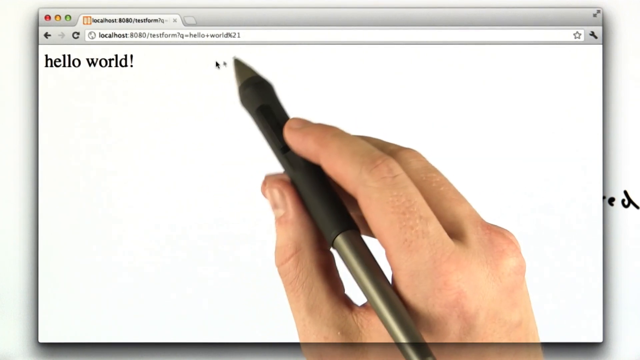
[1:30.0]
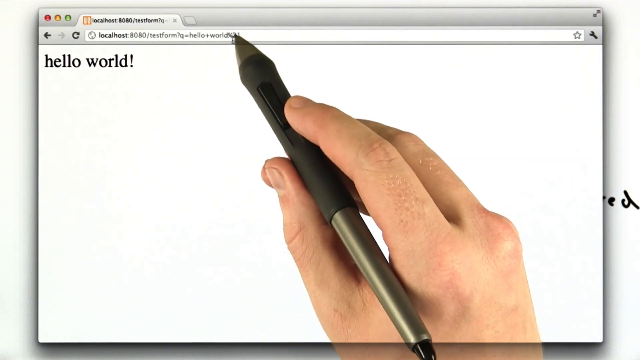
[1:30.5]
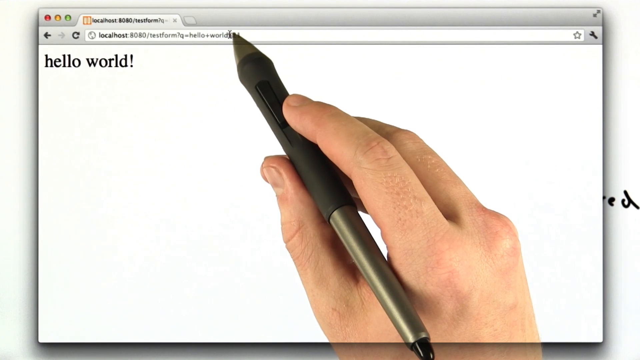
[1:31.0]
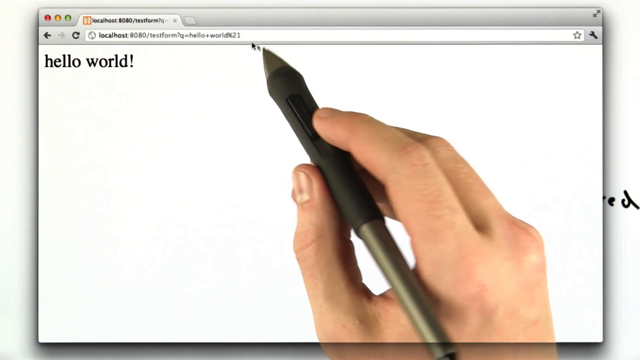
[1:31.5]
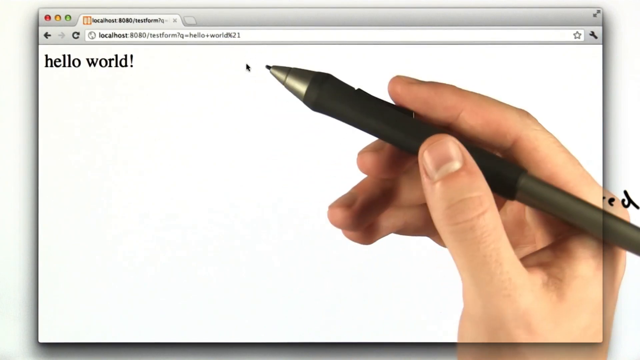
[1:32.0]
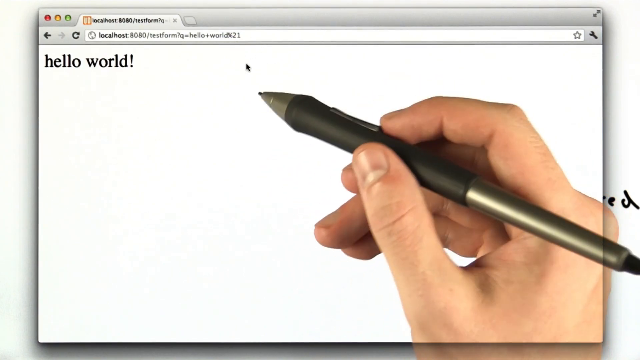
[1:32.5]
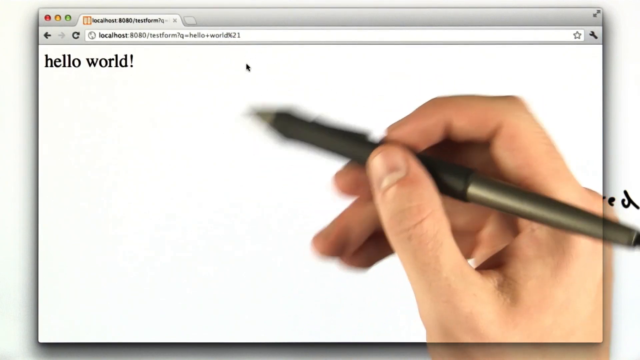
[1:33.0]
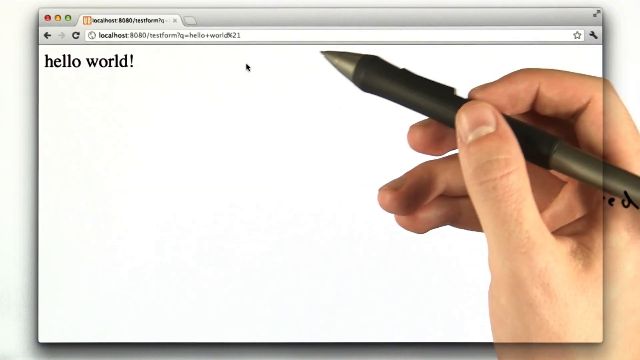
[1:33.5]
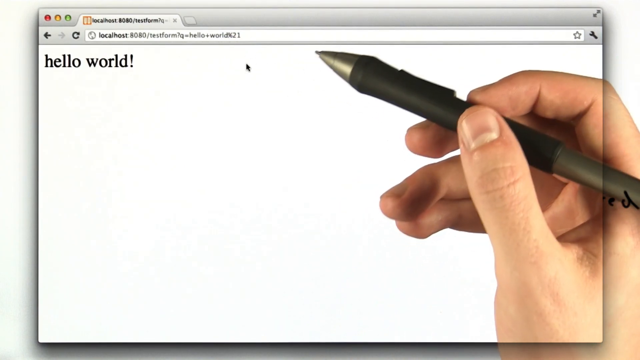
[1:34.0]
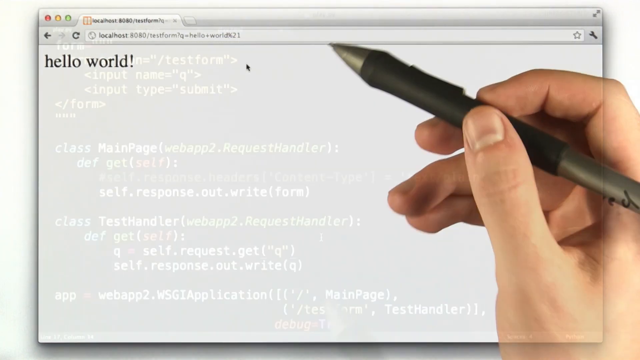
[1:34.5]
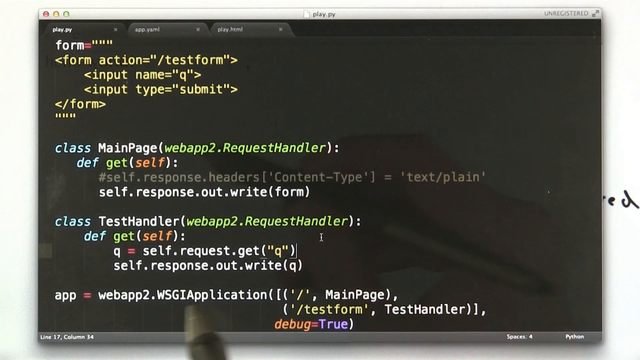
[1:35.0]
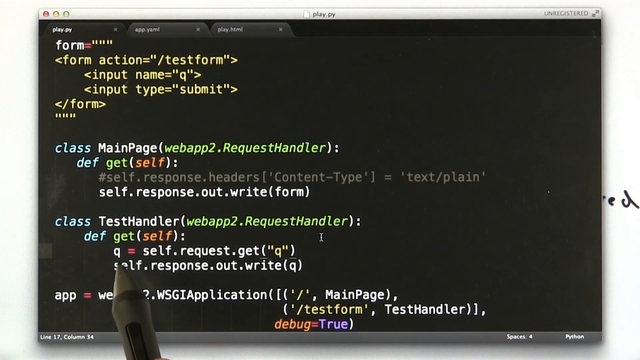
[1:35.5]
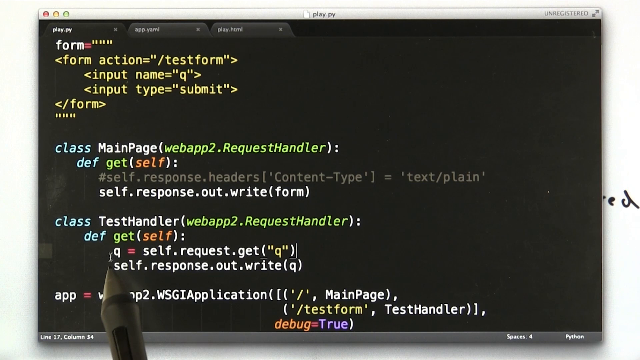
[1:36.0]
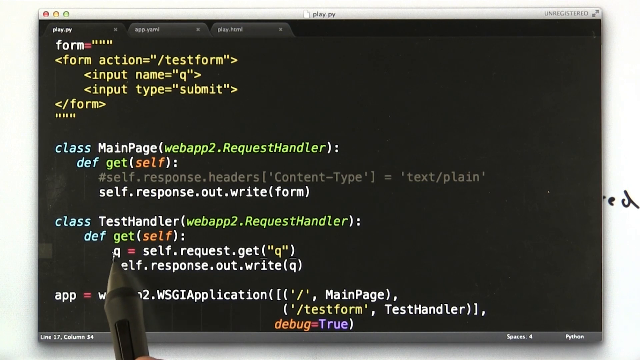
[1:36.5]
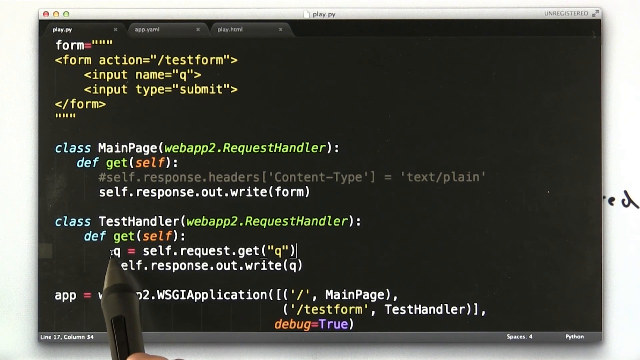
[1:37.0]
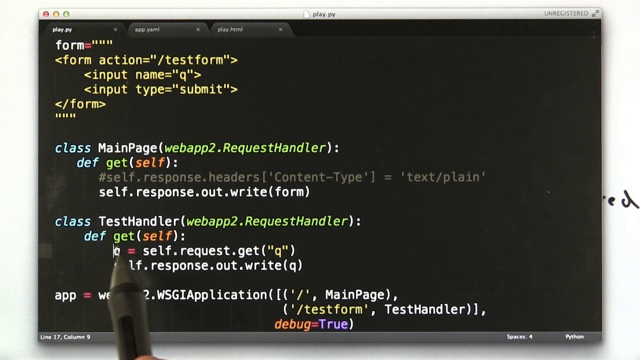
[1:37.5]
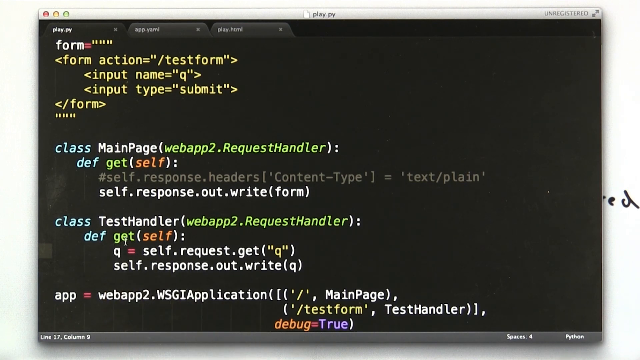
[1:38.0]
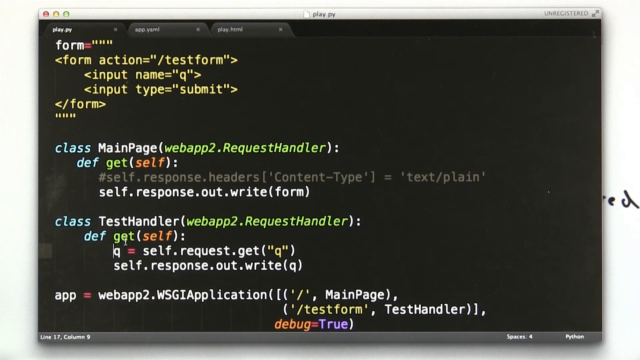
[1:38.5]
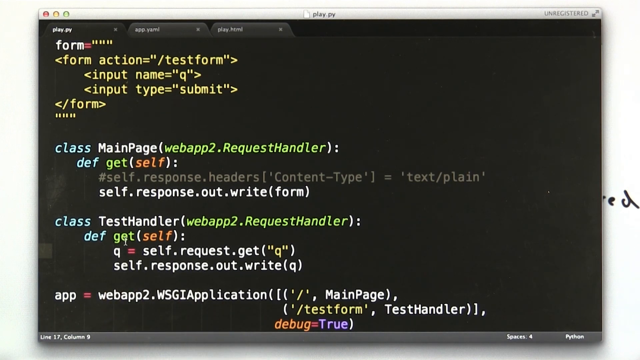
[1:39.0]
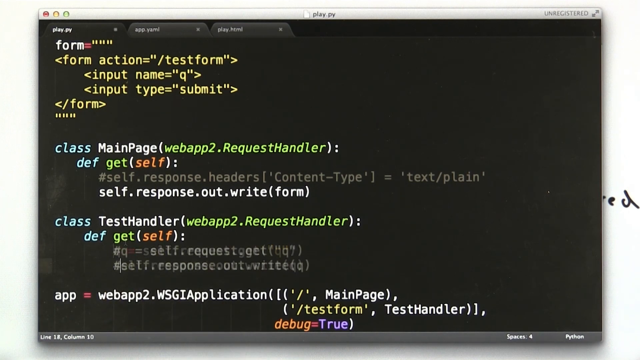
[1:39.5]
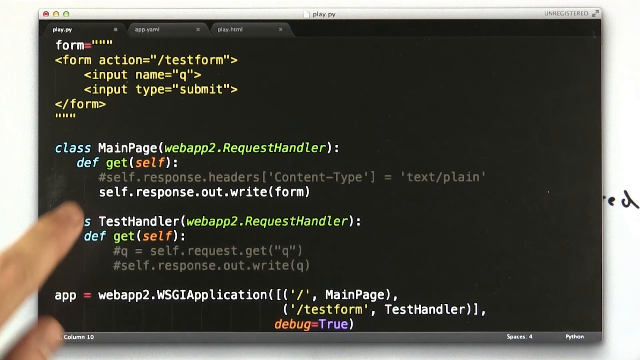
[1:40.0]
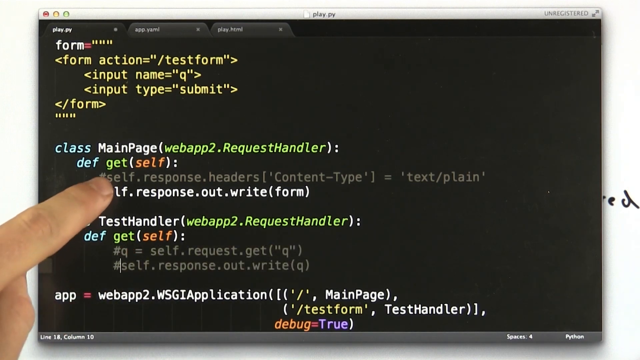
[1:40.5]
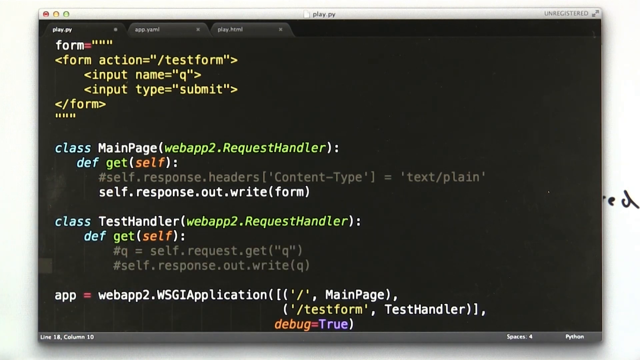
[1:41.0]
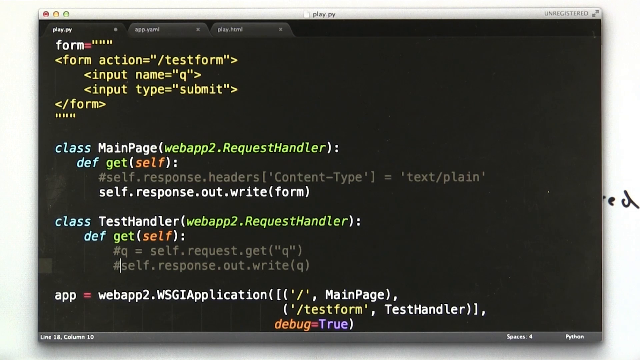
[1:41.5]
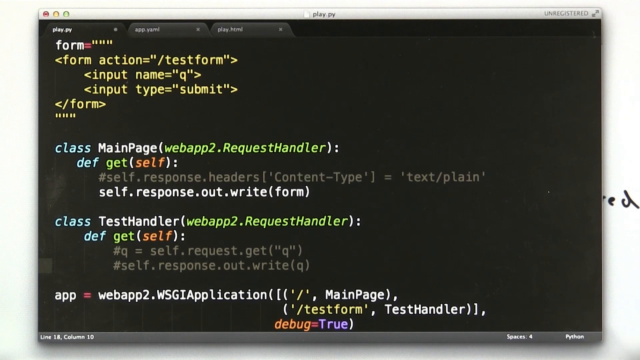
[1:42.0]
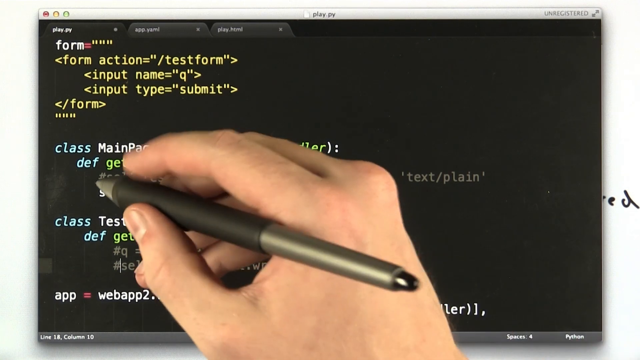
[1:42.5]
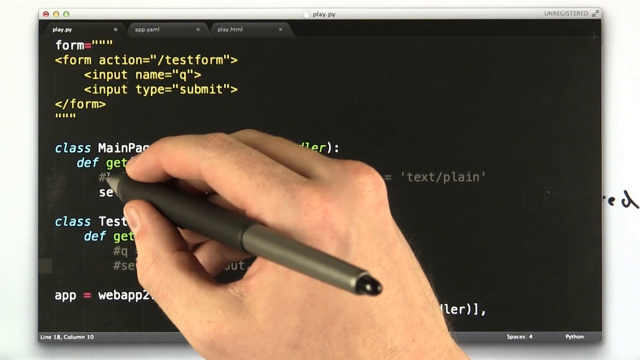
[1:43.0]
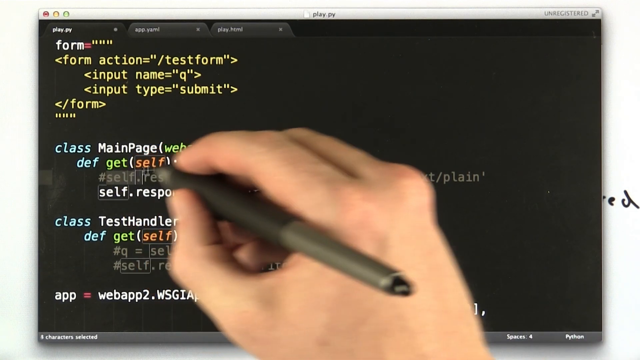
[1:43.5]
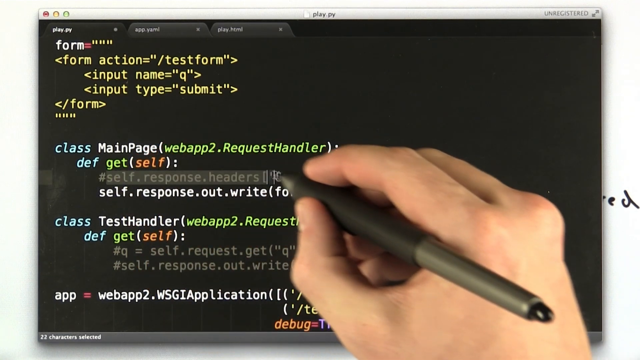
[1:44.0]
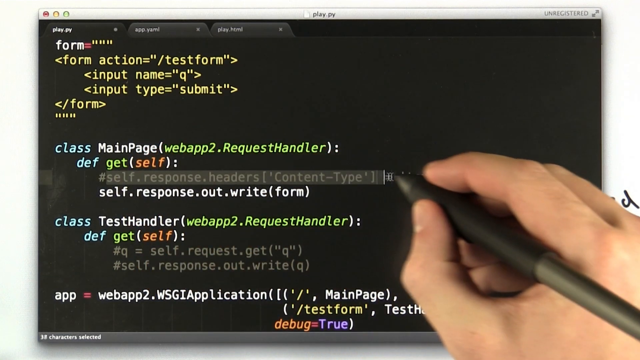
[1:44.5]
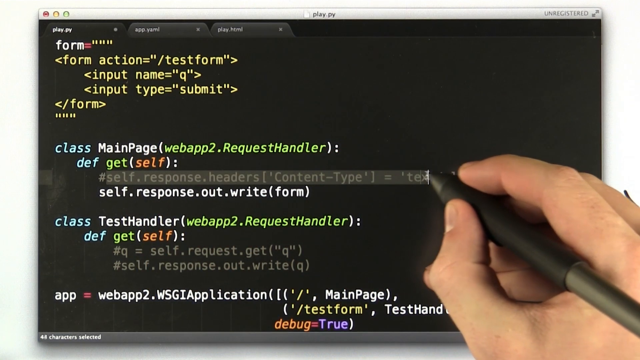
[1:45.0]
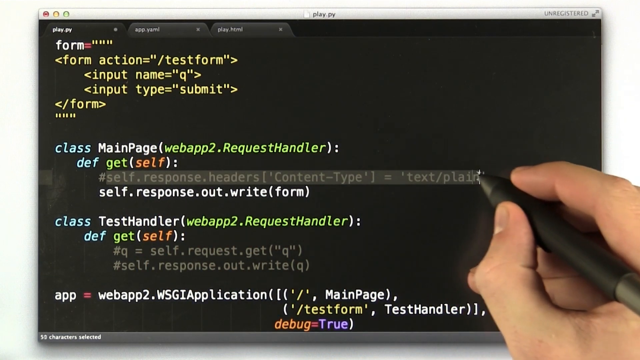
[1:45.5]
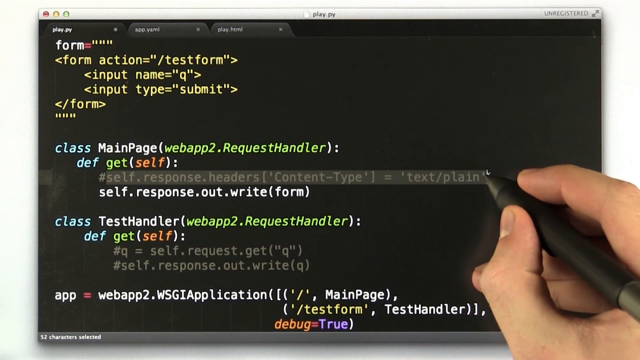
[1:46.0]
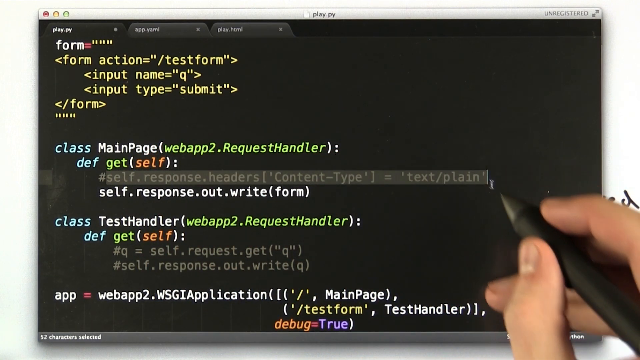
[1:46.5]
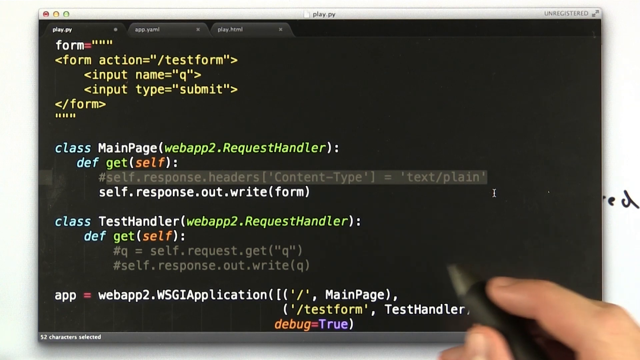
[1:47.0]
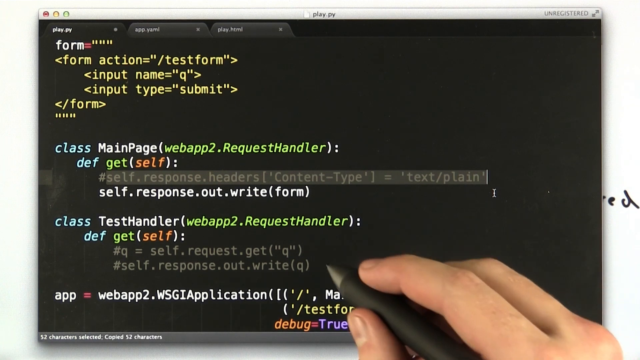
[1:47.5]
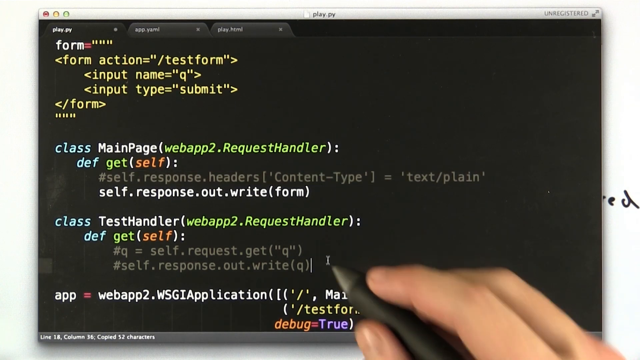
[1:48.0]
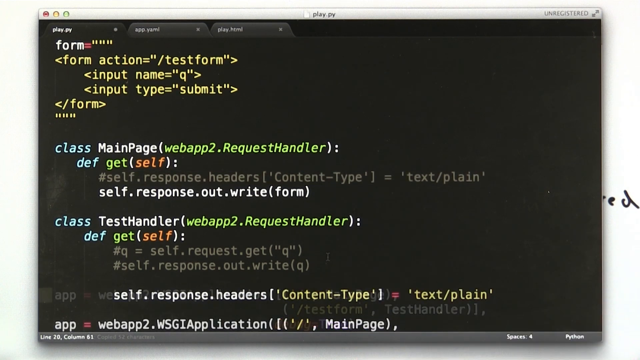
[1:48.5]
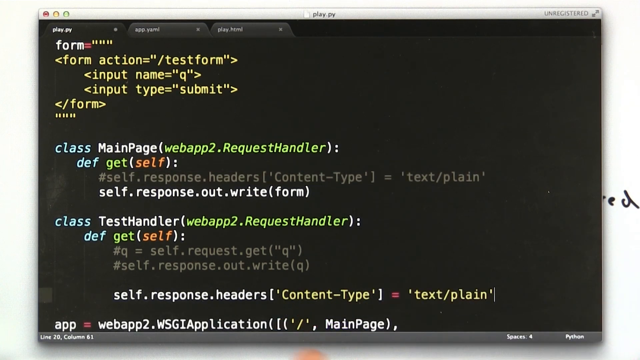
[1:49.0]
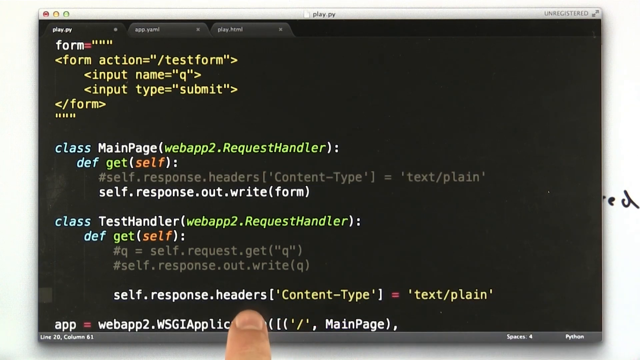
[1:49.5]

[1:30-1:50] A hand that looks like it belongs to a white person holds a black stylus over the webpage that is up. The webpage is mostly white with two words written on it in black: "hello world!". The browser shows that the webpage is being hosted locally, from an app the developer is running. The developer points out different things on the webpage before going back to the code used to create it. The code is in different colors on a black background, and the document is called play.py. The developer highlights a section of the code and points downward, the stylus pointing down and then up again.